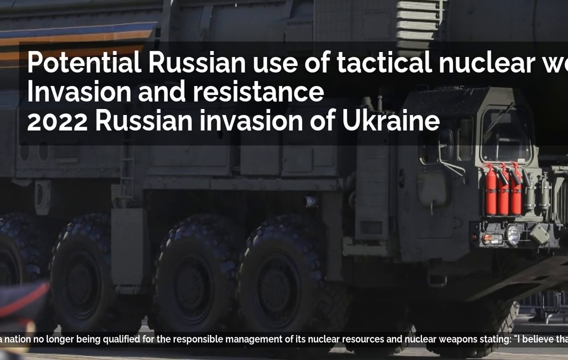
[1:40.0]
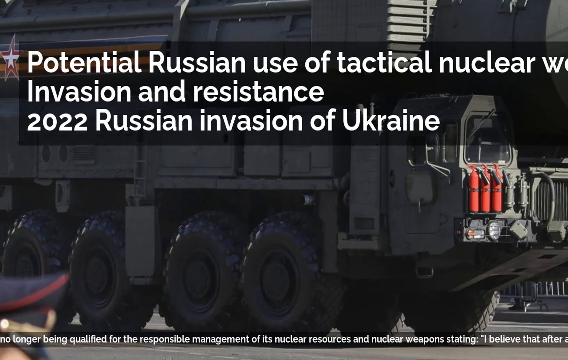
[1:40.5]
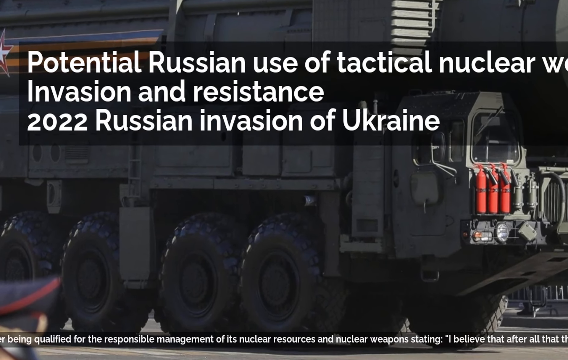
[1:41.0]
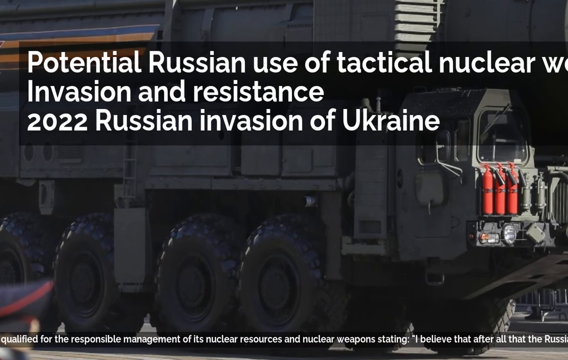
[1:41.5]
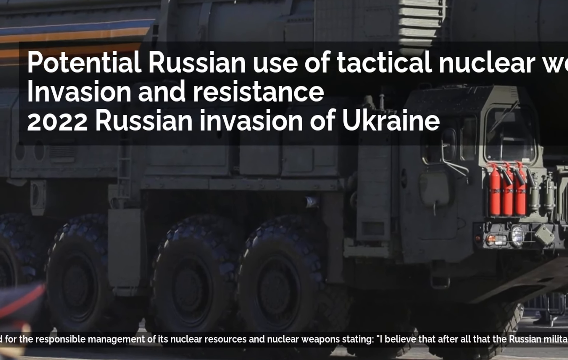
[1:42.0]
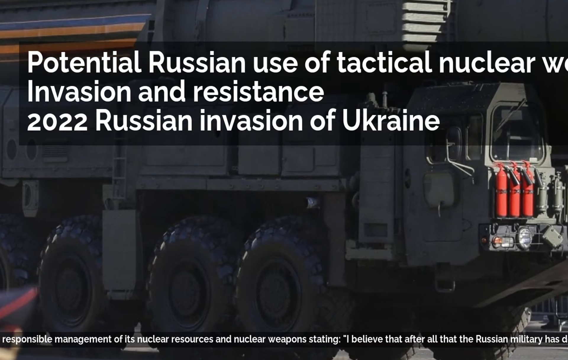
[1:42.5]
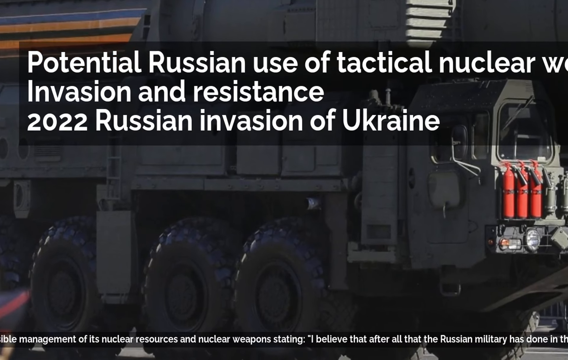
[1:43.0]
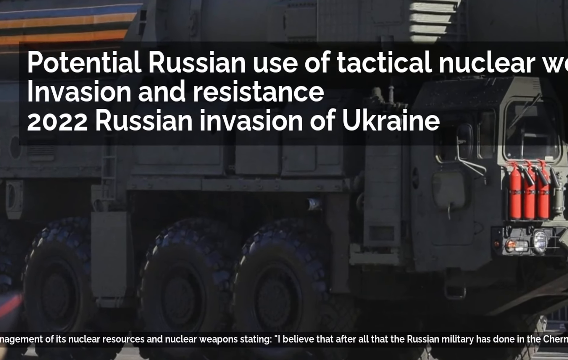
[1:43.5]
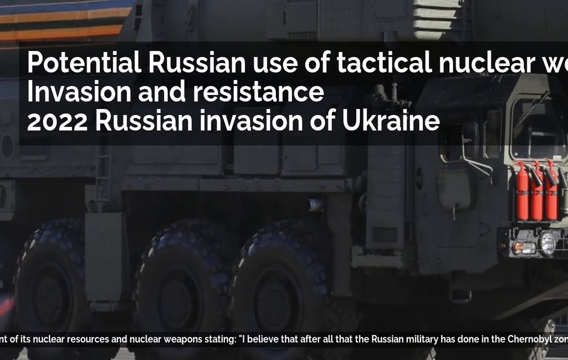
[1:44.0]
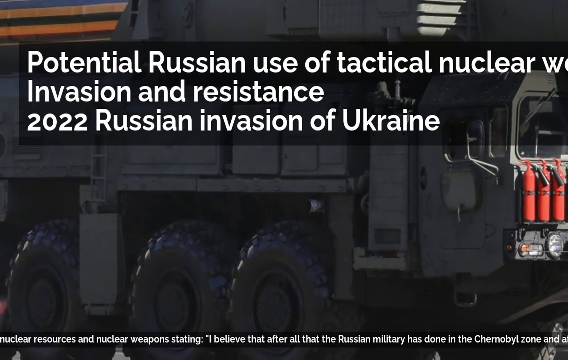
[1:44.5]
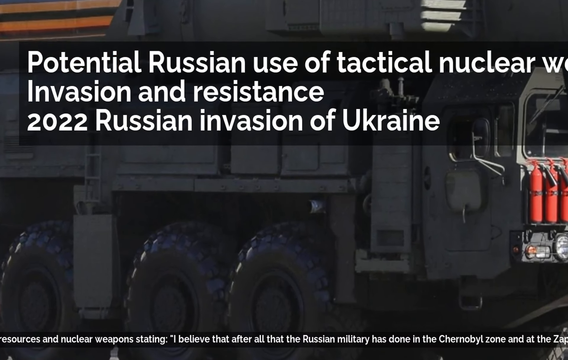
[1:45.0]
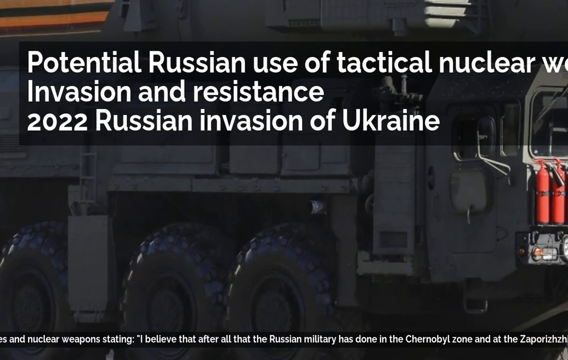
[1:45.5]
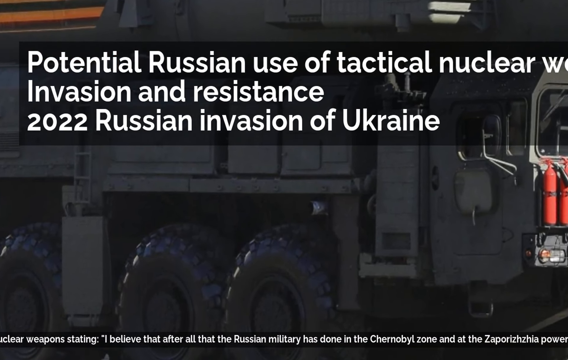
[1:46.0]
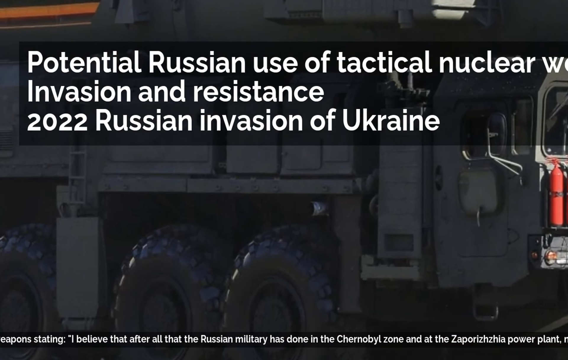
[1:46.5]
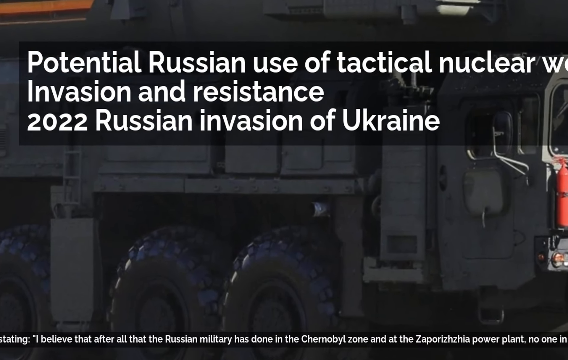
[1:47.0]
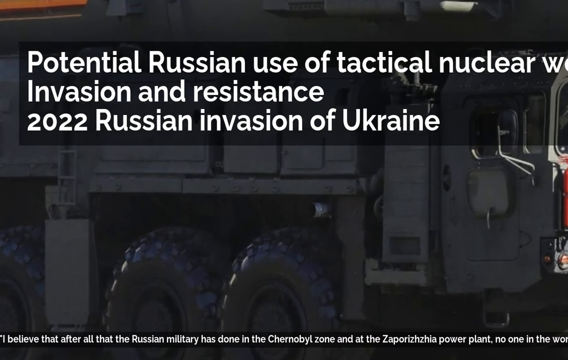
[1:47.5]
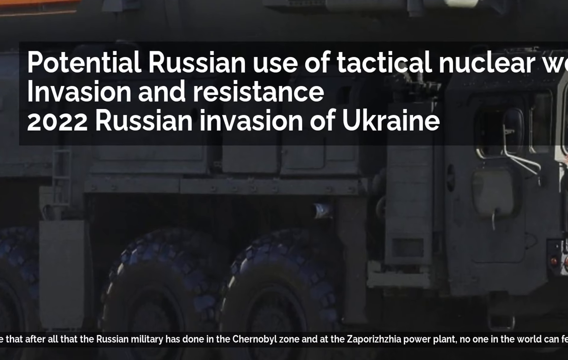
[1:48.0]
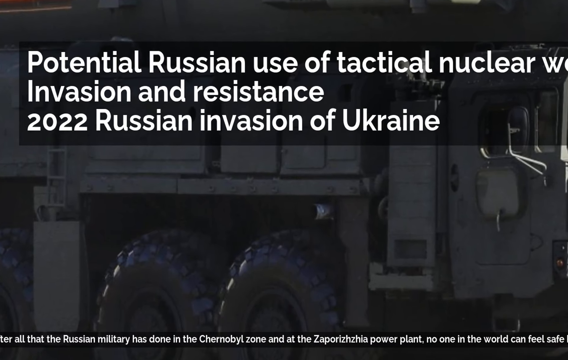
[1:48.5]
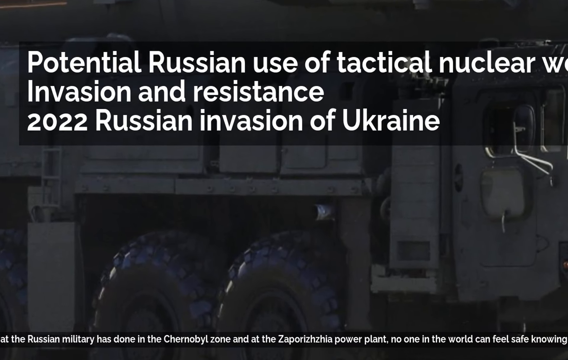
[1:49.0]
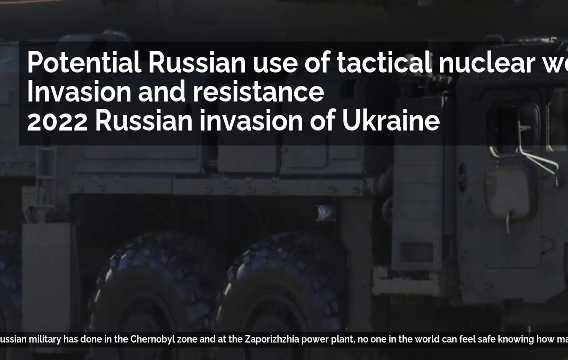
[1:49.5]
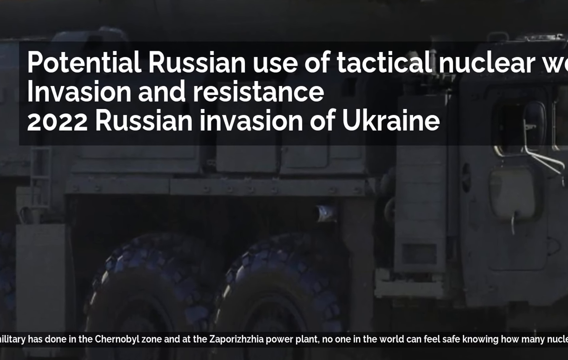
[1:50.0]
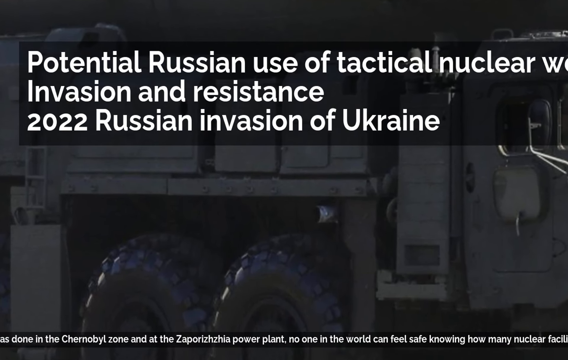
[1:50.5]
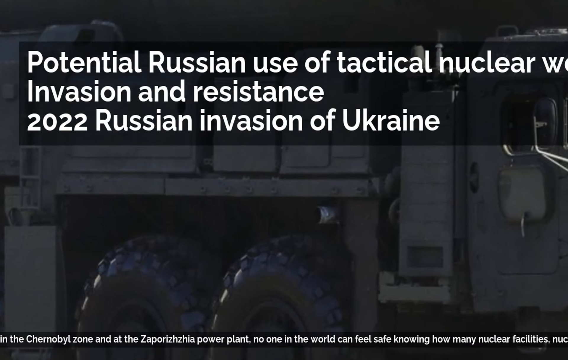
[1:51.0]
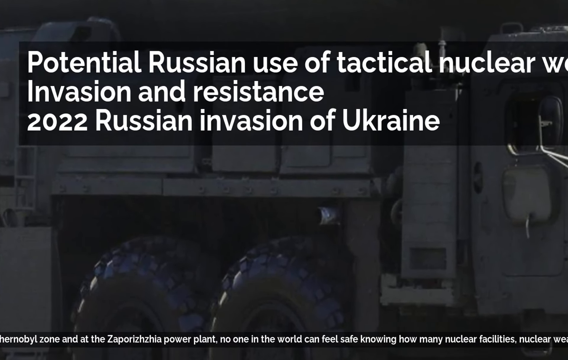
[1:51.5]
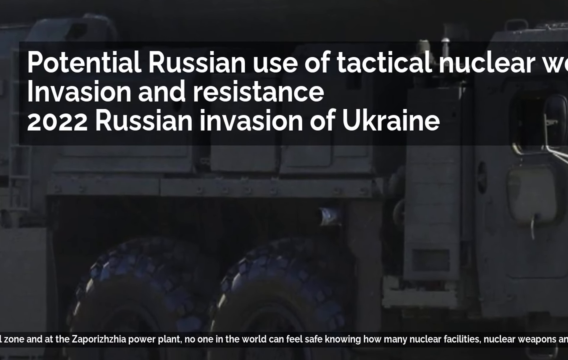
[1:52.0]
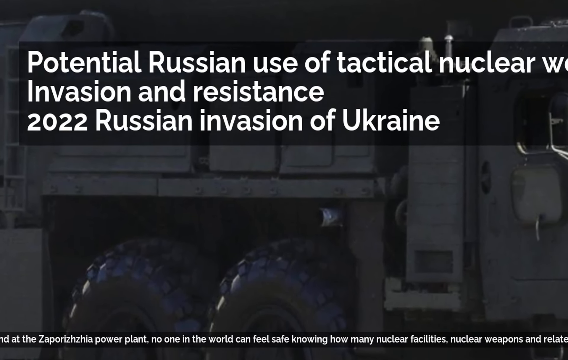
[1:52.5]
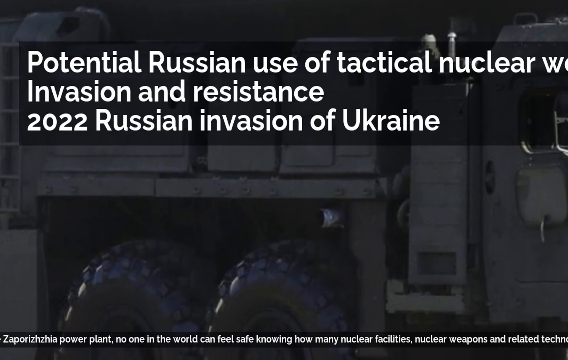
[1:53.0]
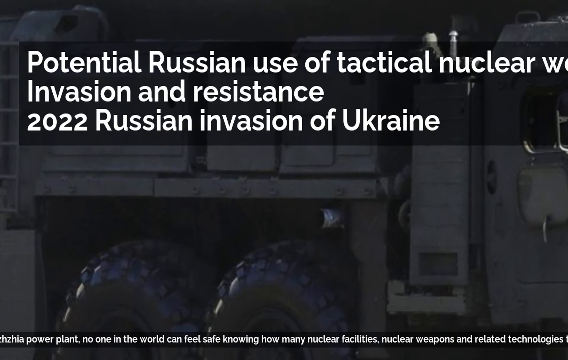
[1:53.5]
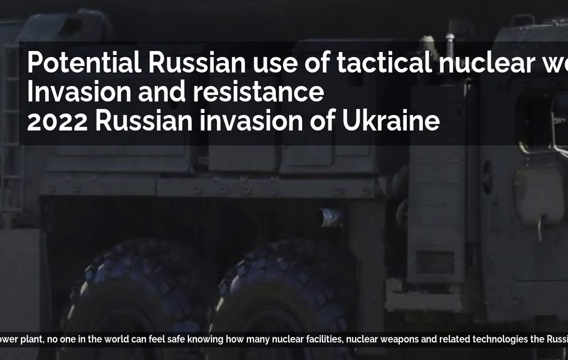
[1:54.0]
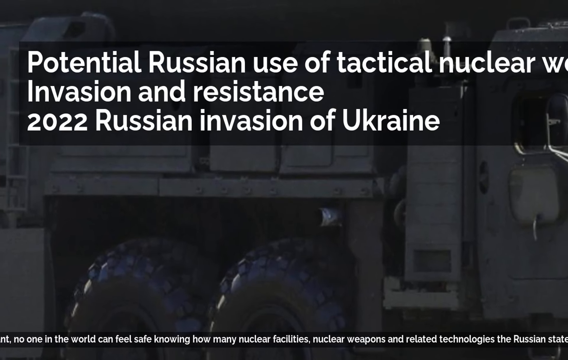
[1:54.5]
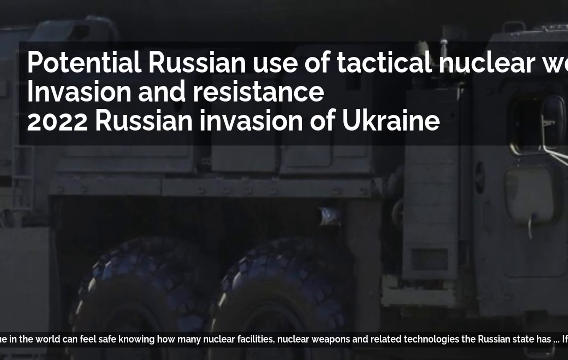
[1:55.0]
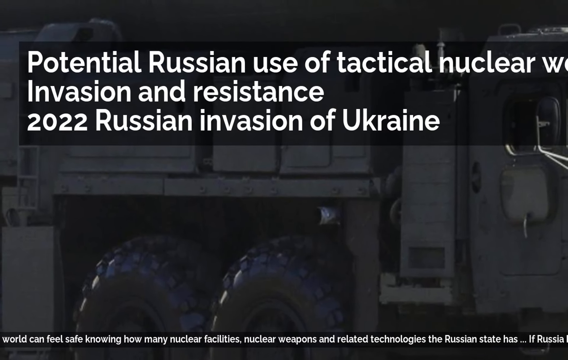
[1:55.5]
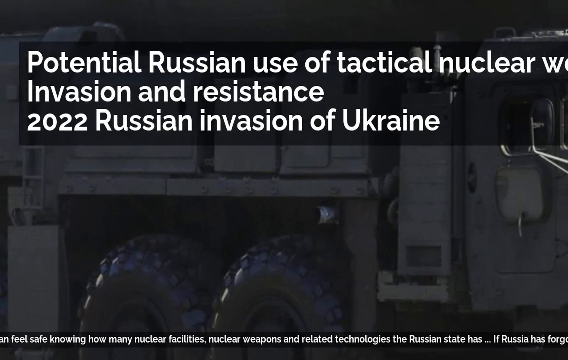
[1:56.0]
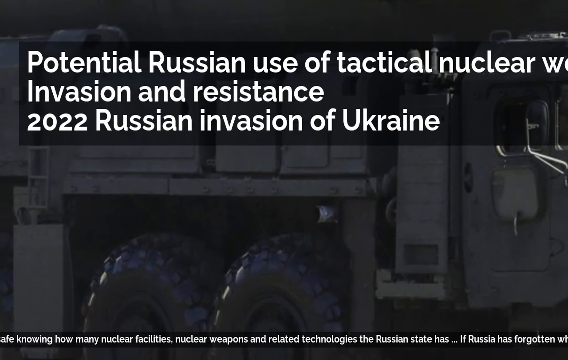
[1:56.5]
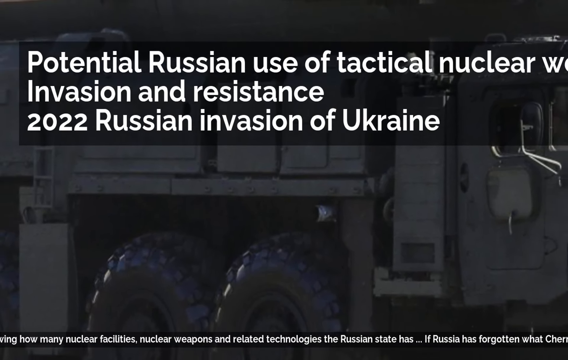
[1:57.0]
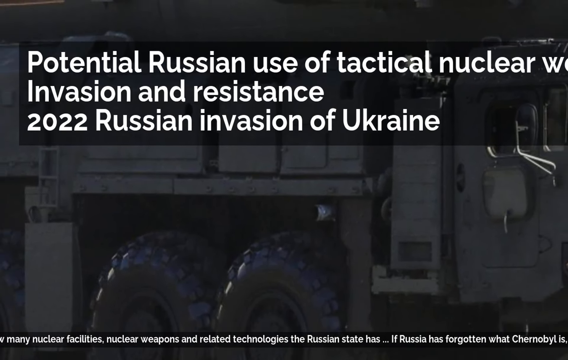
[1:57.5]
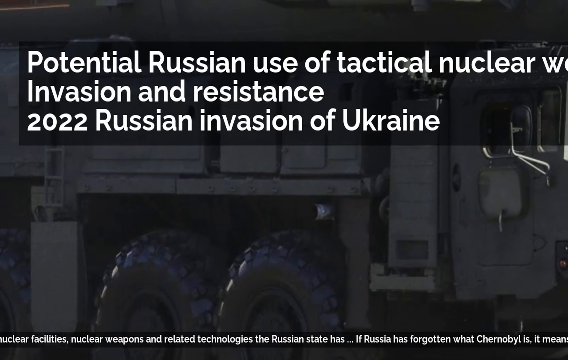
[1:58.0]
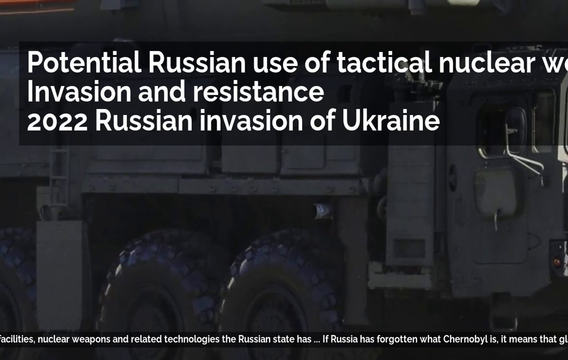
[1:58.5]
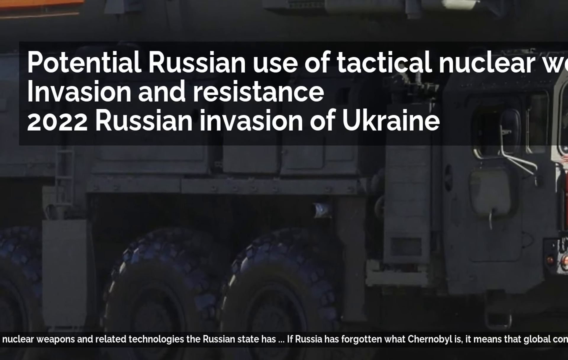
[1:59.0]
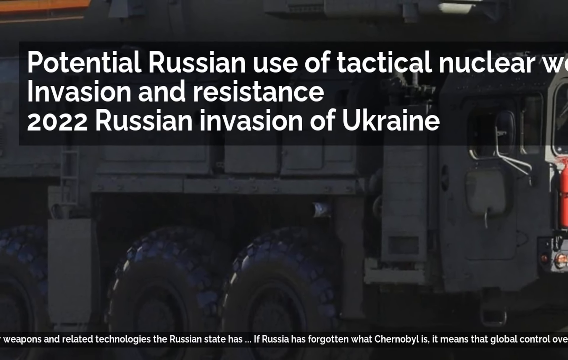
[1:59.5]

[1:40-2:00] The static image of the dark grey armored Russian vehicle remains on screen as the camera keeps zooming in and out. The heading at the top still reads "Potential Russian use of tactical nuclear weaponry invasion and resistance 2022 Russian invasion of Ukraine." The text ribbon at the bottom continues: "I believe that after all that the Russian military has done in the Chernobyl zone and at the Zaporizhzhia power plant, no one in the world can feel safe knowing how many nuclear facilities, nuclear weapons and related technologies the Russian state has. If Russia has forgotten what Chernobyl is, it means that global."